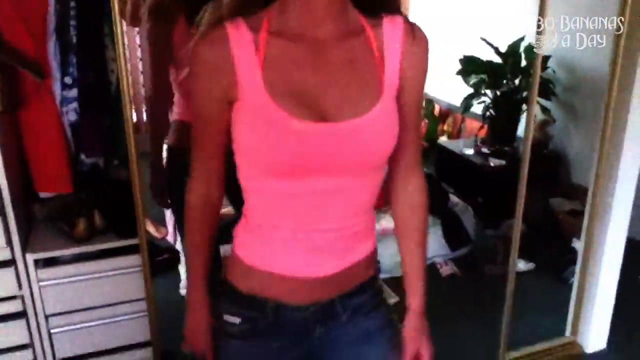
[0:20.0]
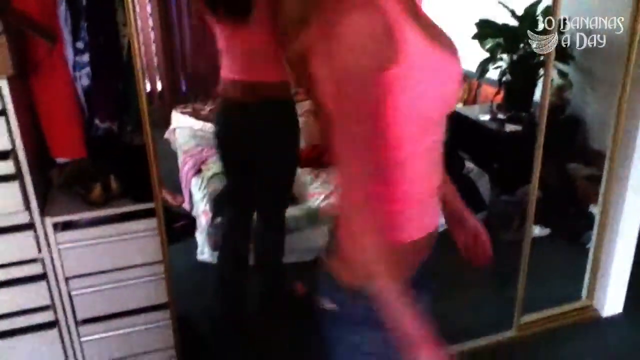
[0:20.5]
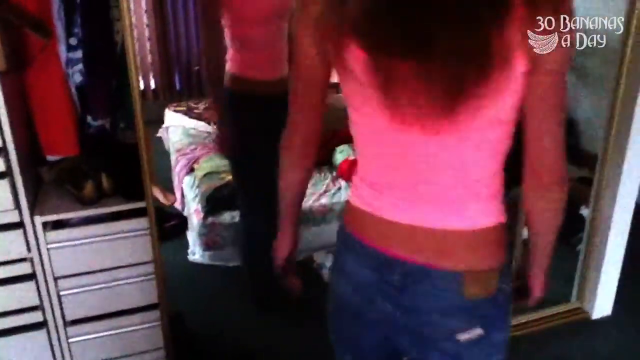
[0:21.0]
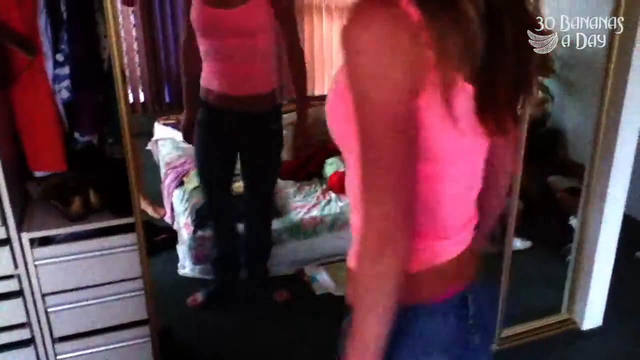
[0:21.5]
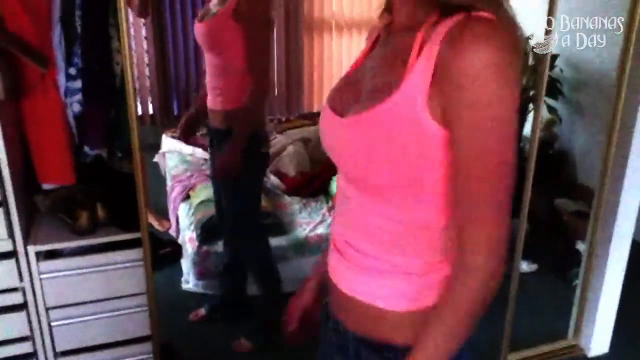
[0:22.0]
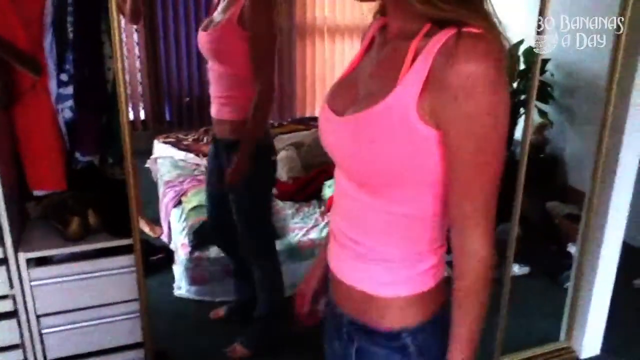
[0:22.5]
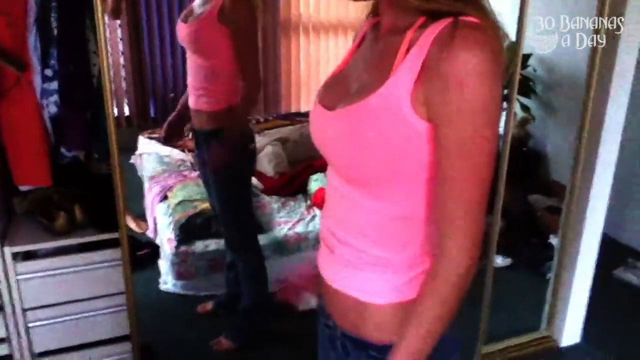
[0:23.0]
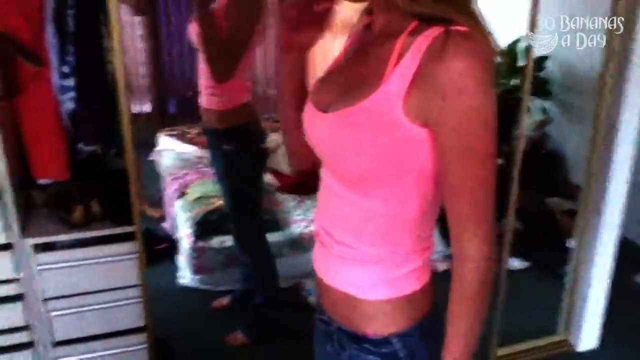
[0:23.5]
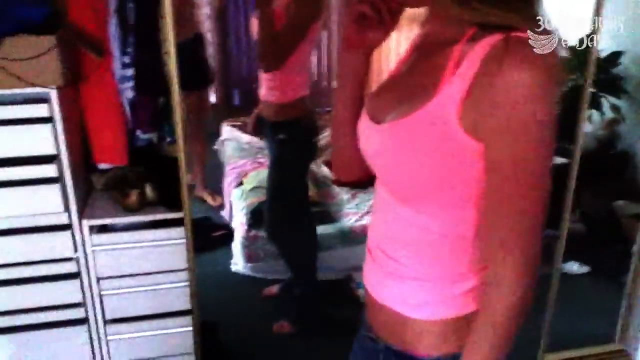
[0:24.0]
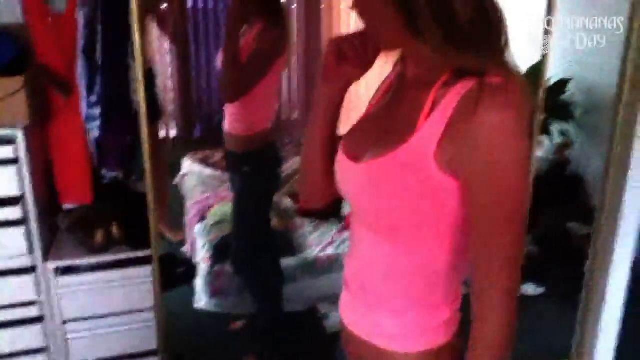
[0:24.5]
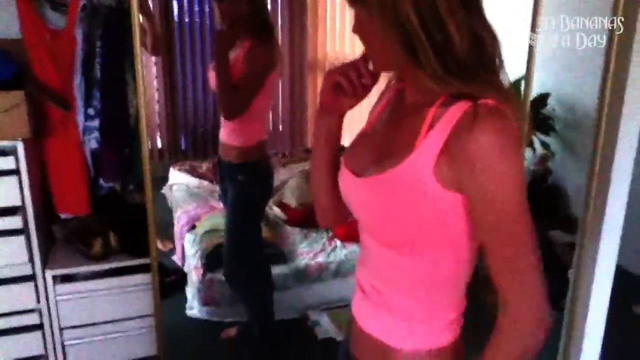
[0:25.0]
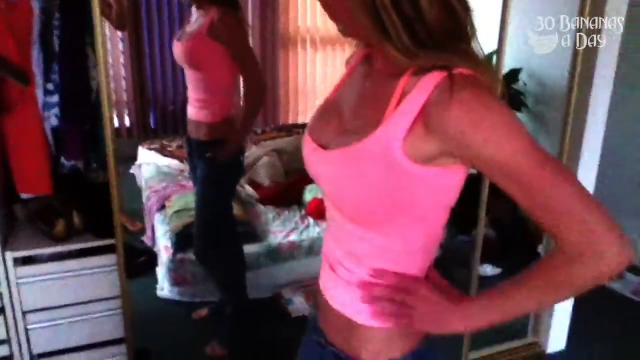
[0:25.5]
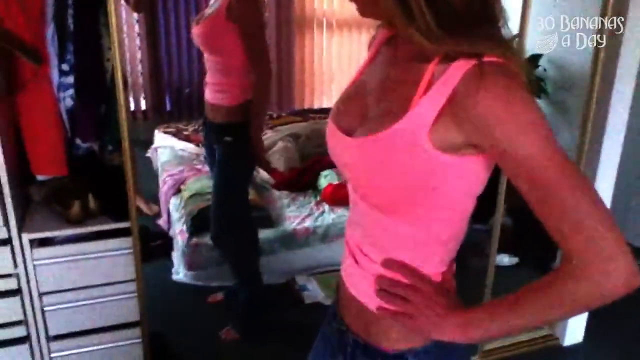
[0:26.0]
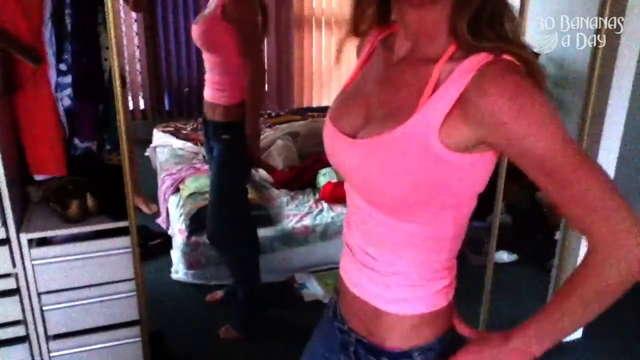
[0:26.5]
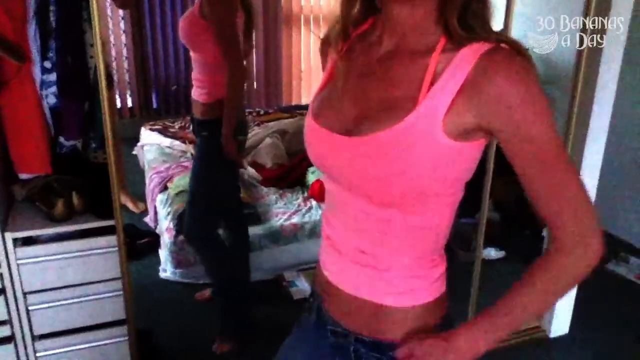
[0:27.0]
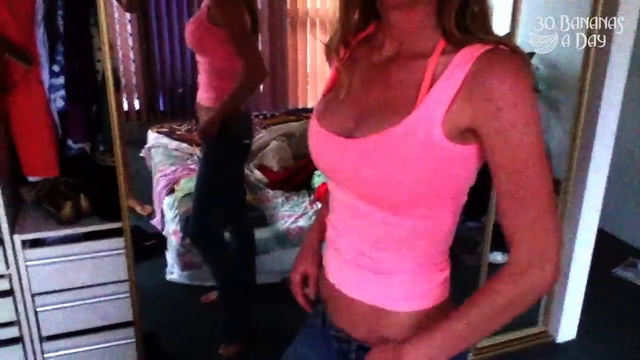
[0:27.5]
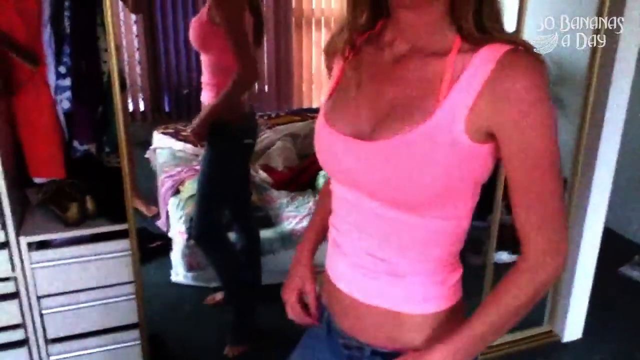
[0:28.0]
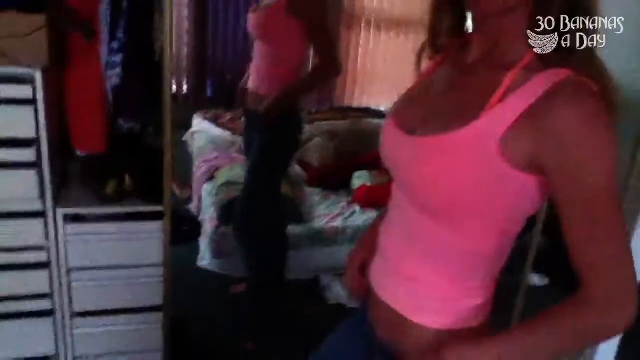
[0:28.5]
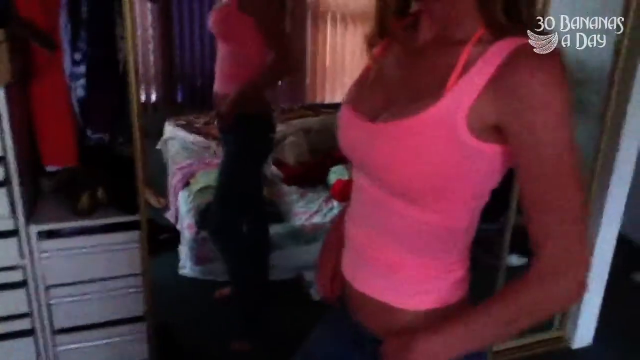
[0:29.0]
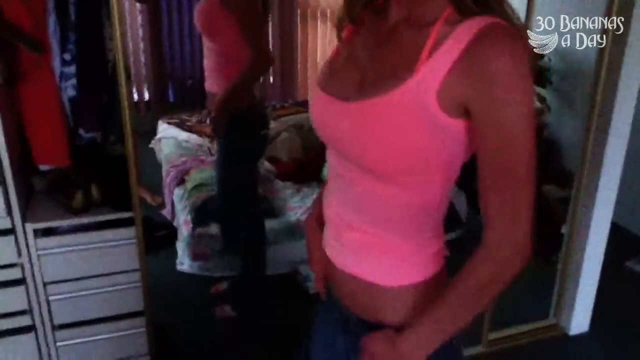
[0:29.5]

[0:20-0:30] A white woman in front of the camera wears a pink crop top with a pink strap around her neck, blue jeans, and has long brown hair. White text in the top right says "30 bananas", with an image of three bananas, and "a day". Behind her is a mirror with gold lining on the edging. The carpet looks blue. The bed reflected behind her is white, with clothes strewn all over it. There is a white wall on the right side, and what seems to be a green plant sitting on a black dresser. A partially covered closet behind her shows some of her clothes, with white drawers on the left side. She spins around to show her side profile, then puts her left hand under her chin and her right hand in her pocket.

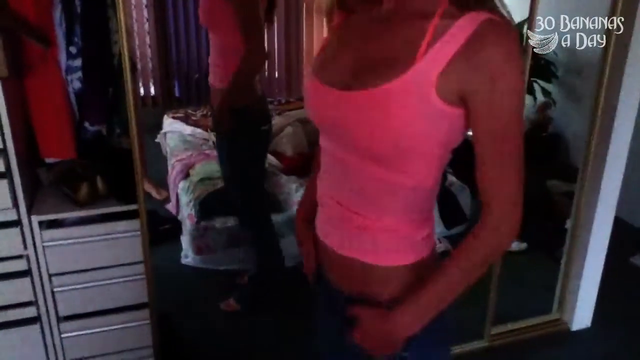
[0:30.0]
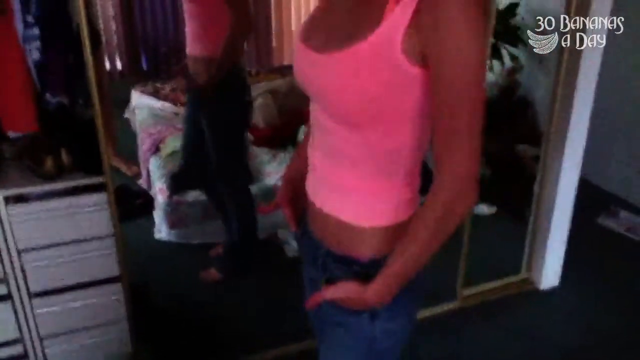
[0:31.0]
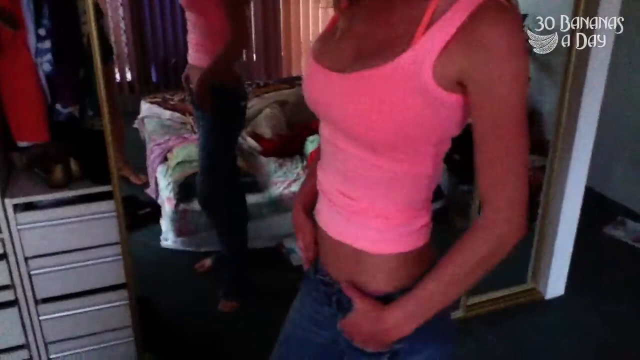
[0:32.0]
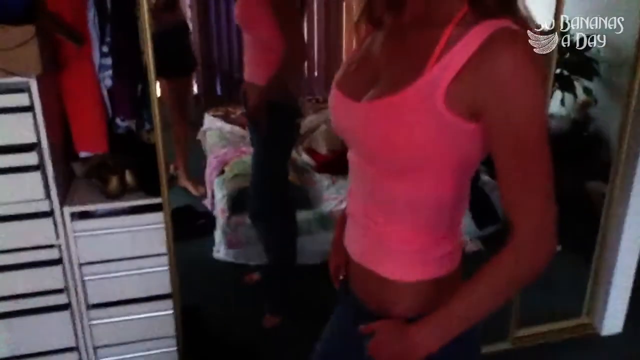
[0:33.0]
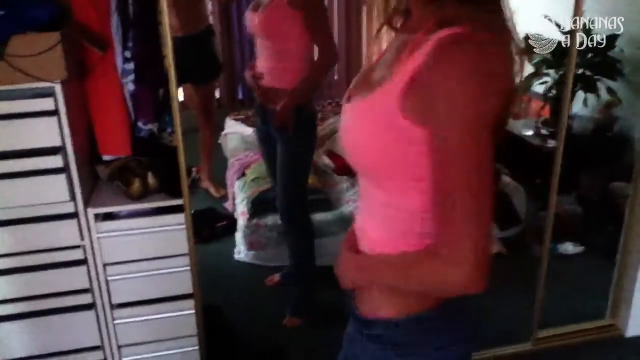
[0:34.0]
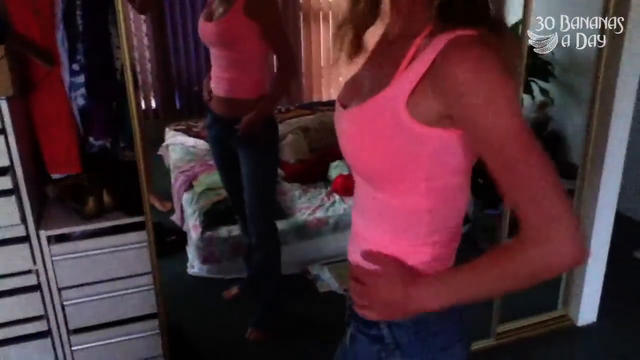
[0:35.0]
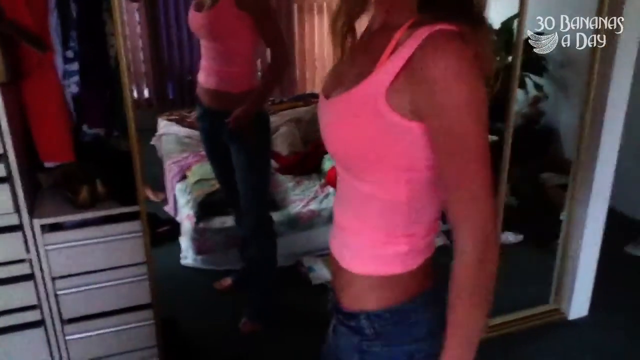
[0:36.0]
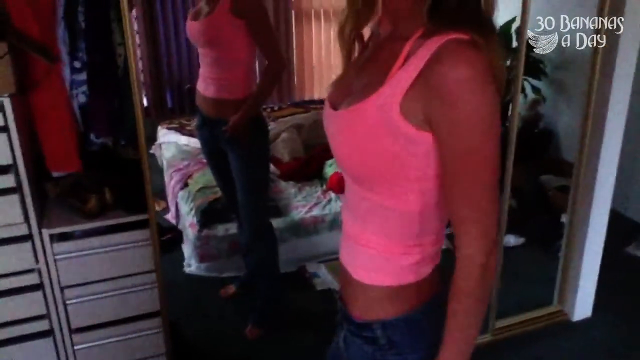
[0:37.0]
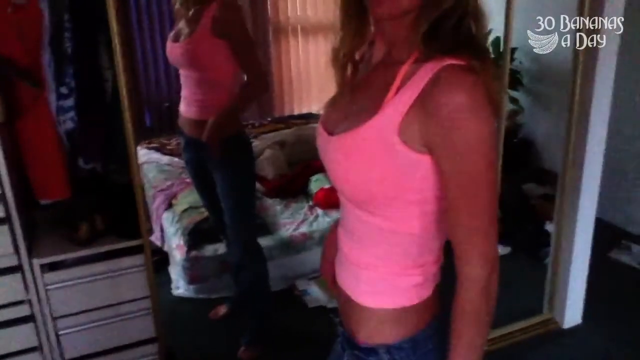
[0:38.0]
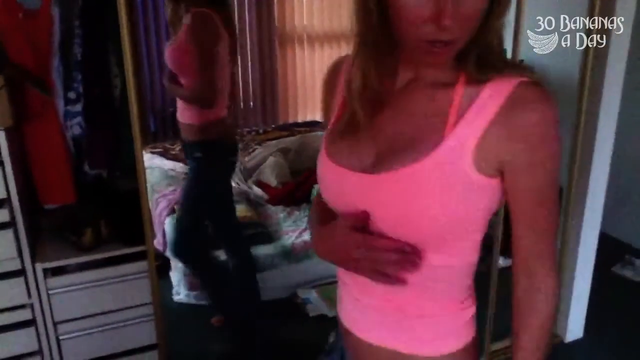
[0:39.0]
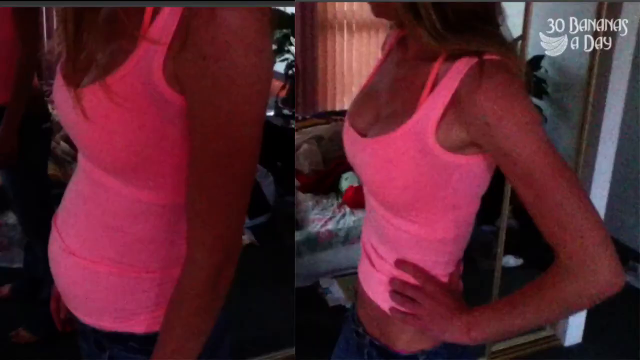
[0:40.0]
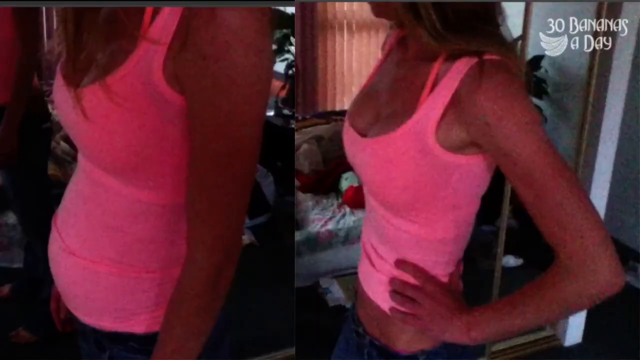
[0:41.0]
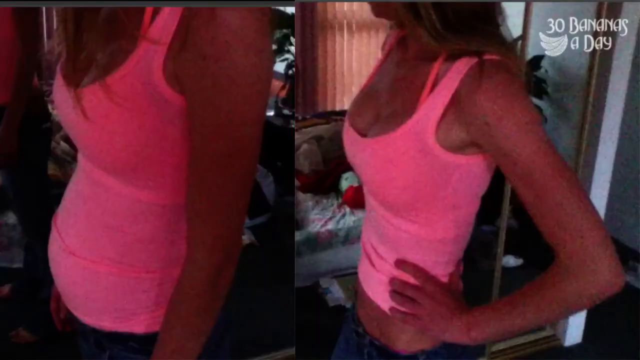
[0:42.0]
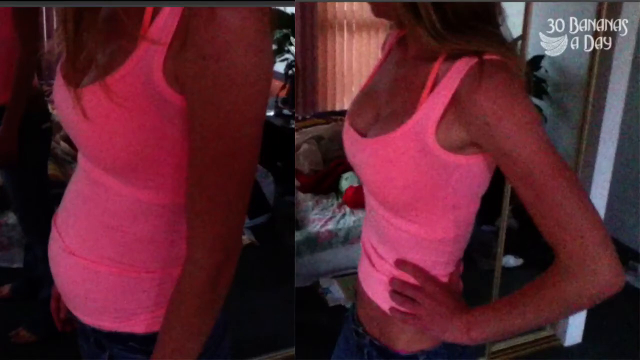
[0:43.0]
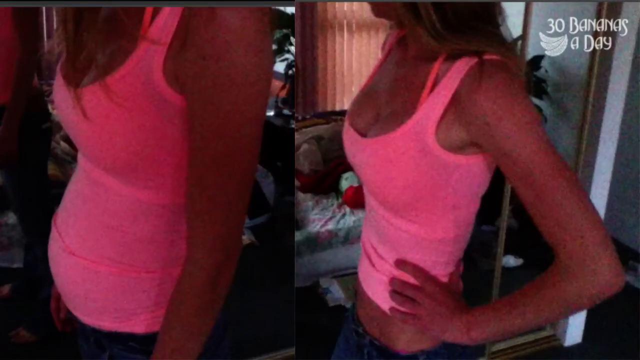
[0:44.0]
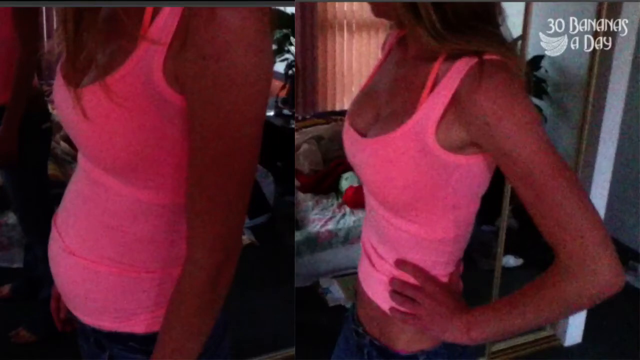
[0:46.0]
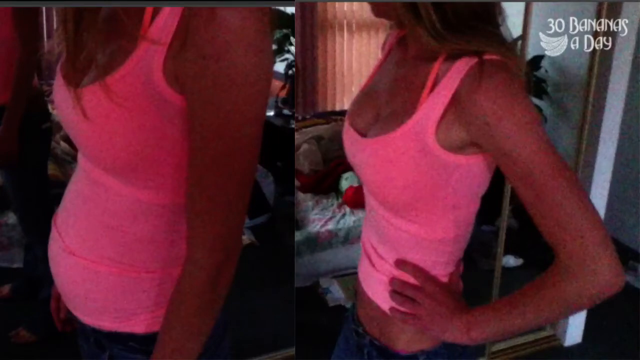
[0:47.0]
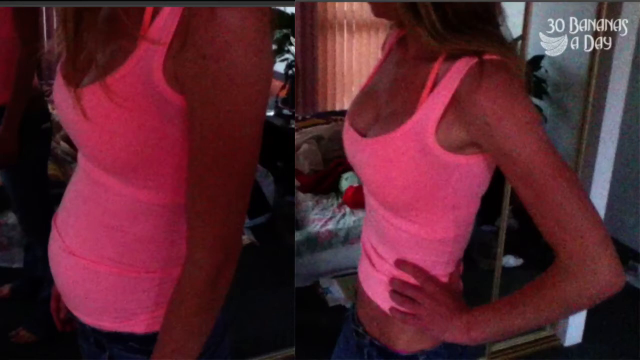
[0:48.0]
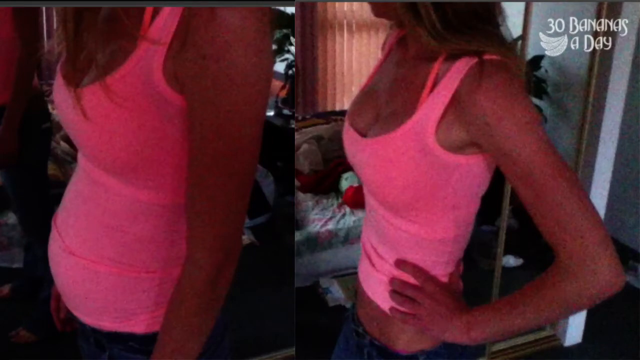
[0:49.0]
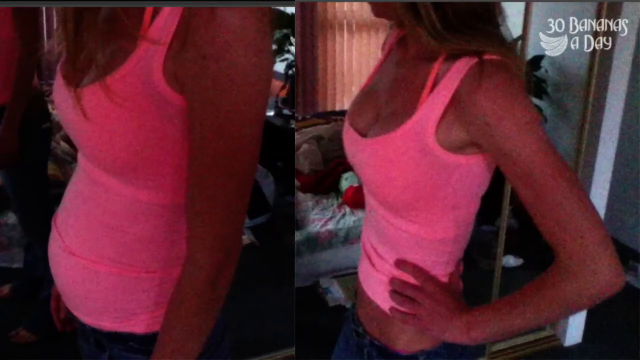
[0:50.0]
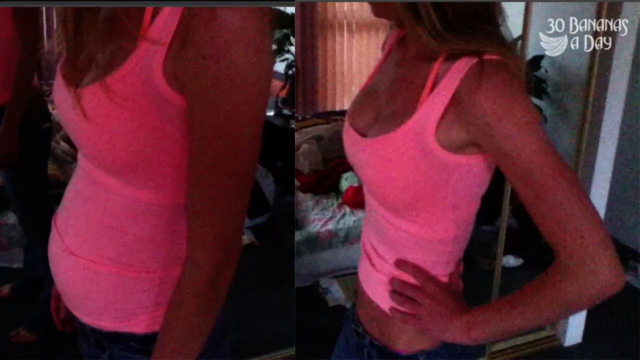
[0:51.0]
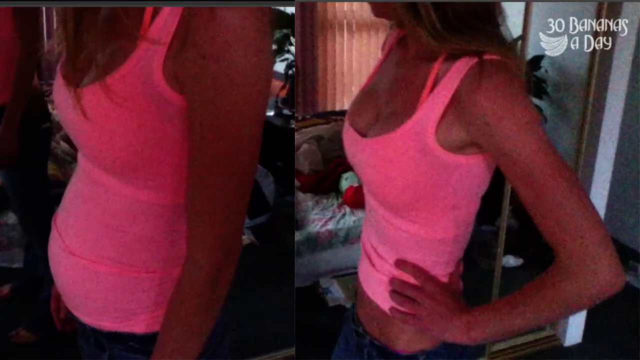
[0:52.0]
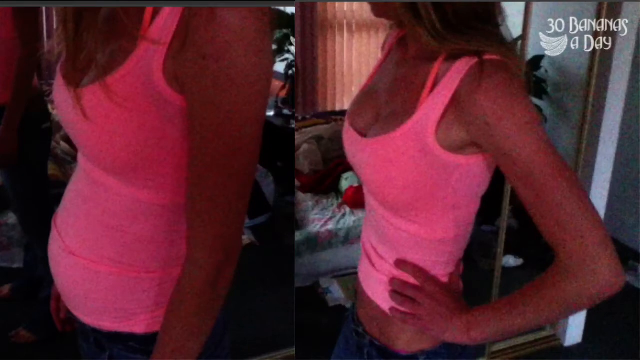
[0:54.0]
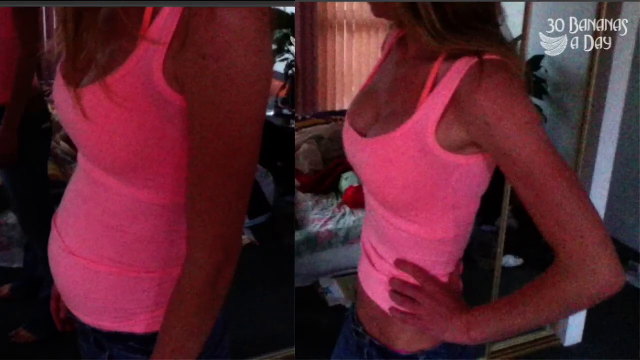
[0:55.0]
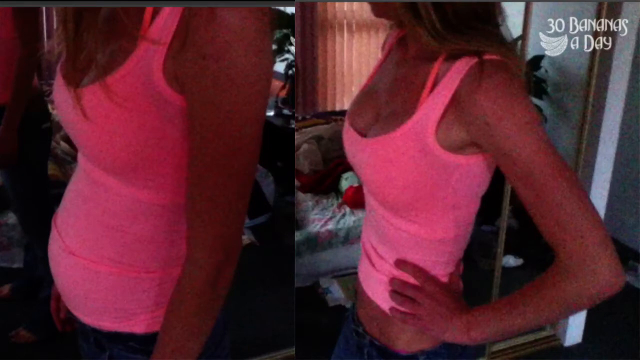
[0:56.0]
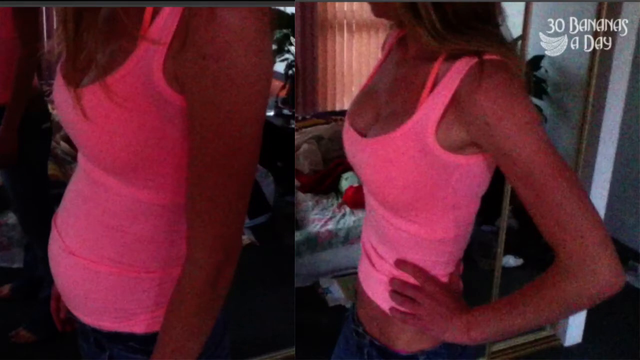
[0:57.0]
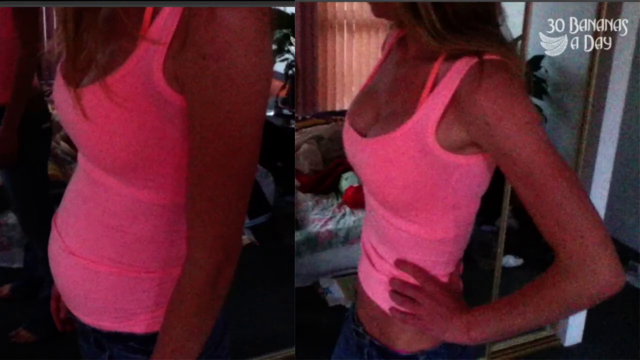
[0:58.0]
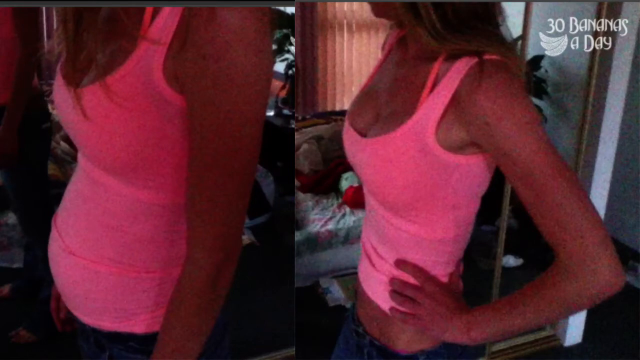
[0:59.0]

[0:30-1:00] A white woman in a pink crop top, blue jeans and a pink strap around her neck, with long brown hair, stands in side profile against the mirror behind her. The mirror reflects a white bed with clothes strewn all over it and purple and brown window shutters. White text in the top right says "30 bananas", with an image of three bananas, and "a day". The mirror has a brown, gold-like frame. There is a blue carpet and a white wall on the right side. Toward the left there seems to be a closet, with white drawers at the bottom and some clothes toward the top left. She has her hands in her pockets with her thumbs out by her waist, then rubs her belly, faces the camera person, and walks forward.